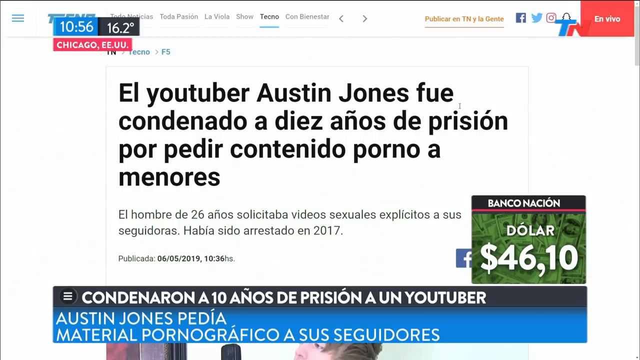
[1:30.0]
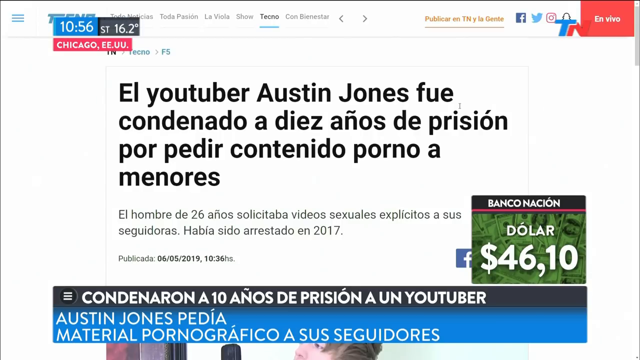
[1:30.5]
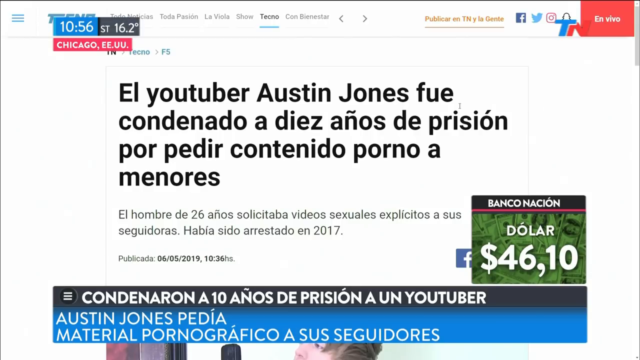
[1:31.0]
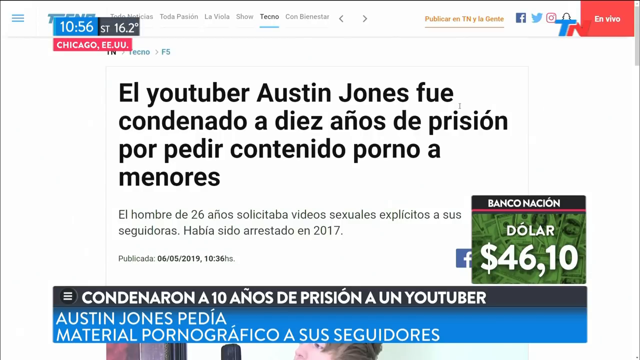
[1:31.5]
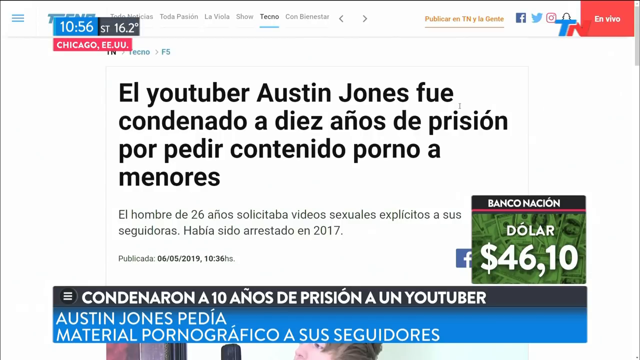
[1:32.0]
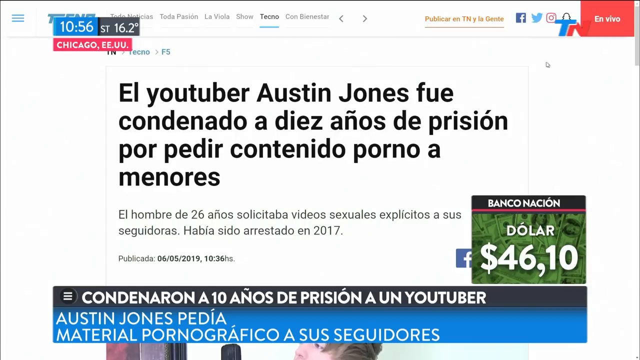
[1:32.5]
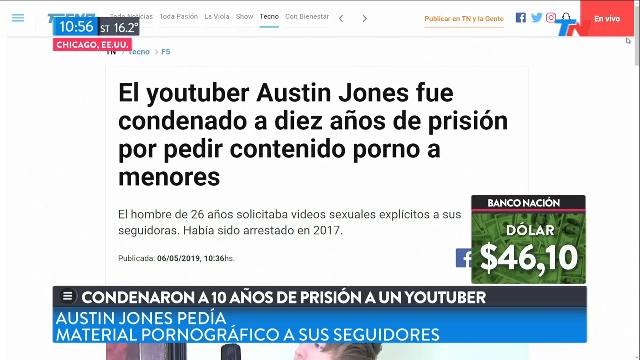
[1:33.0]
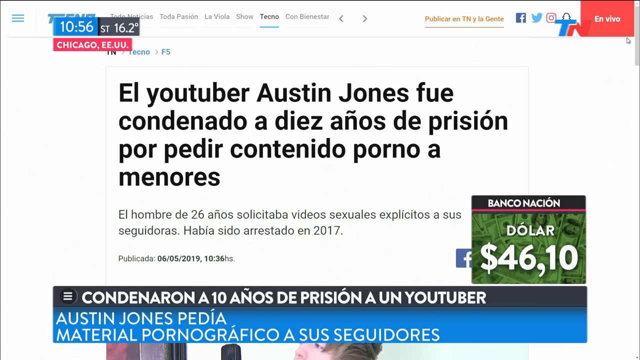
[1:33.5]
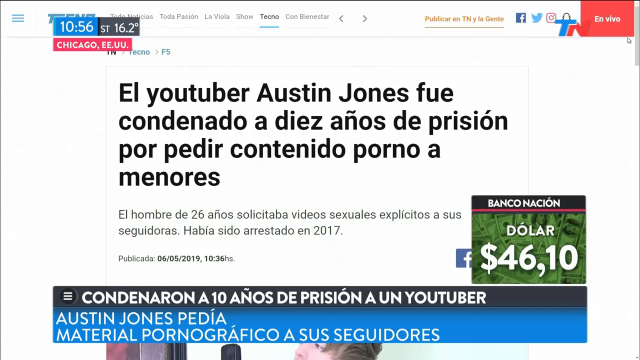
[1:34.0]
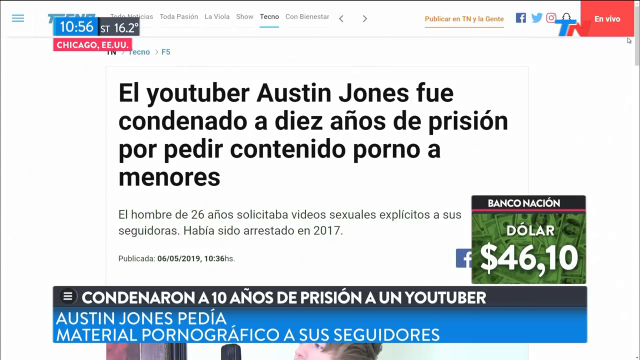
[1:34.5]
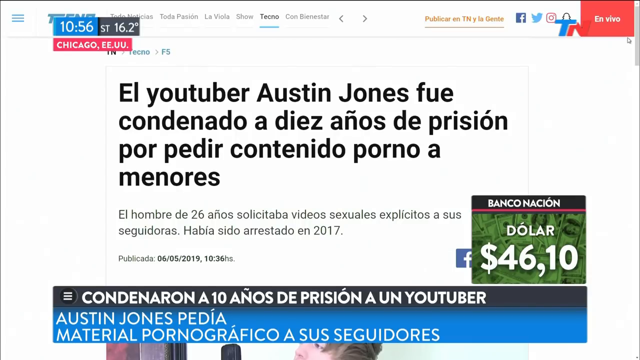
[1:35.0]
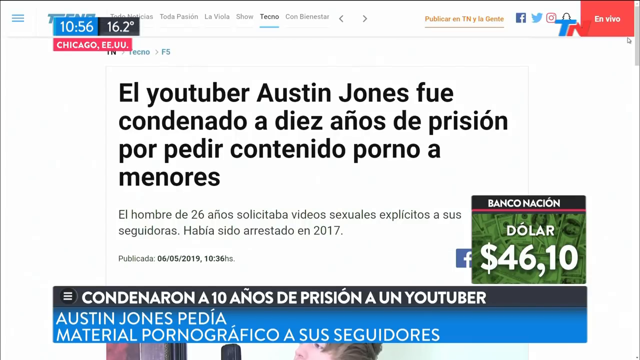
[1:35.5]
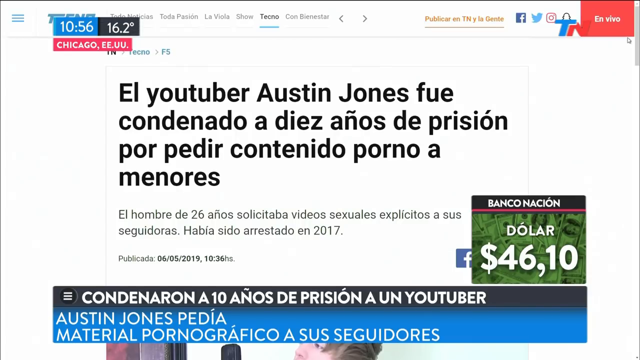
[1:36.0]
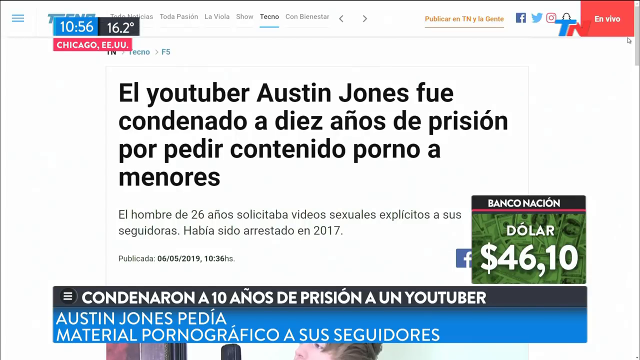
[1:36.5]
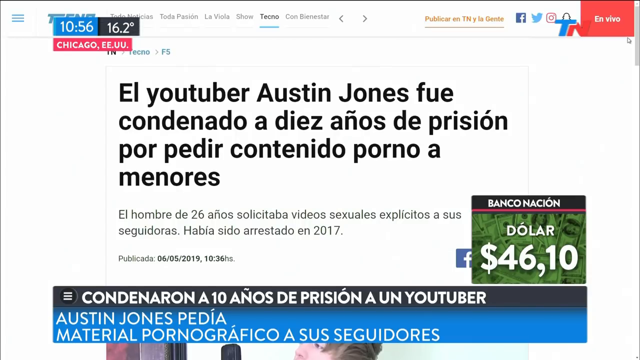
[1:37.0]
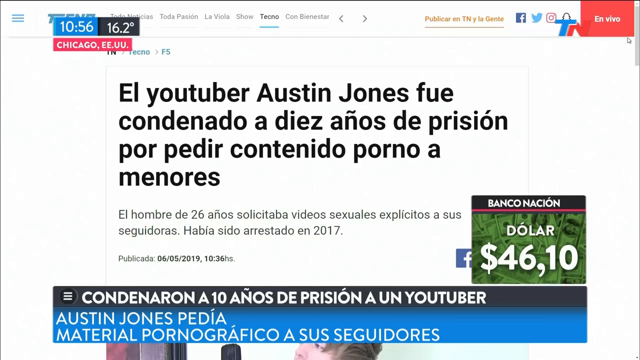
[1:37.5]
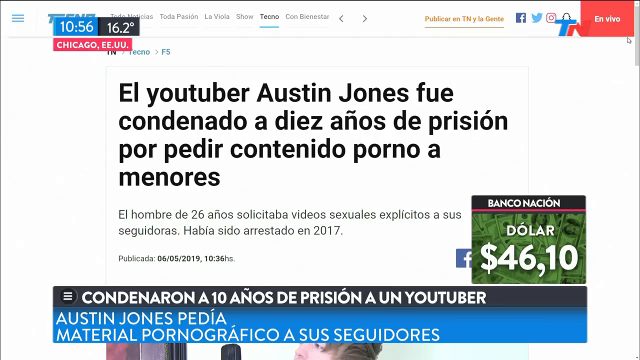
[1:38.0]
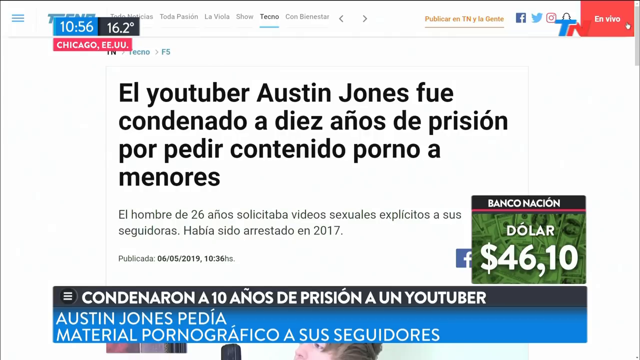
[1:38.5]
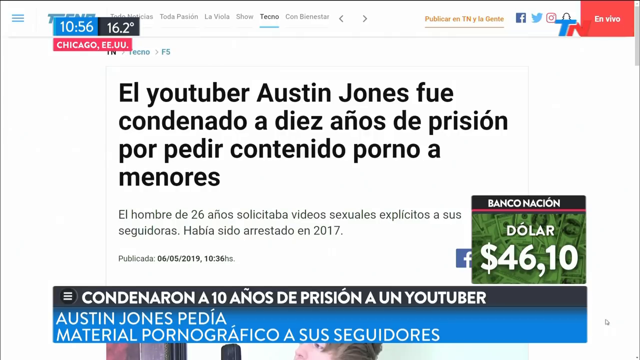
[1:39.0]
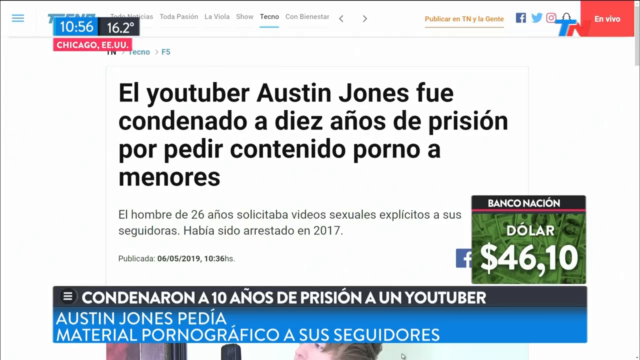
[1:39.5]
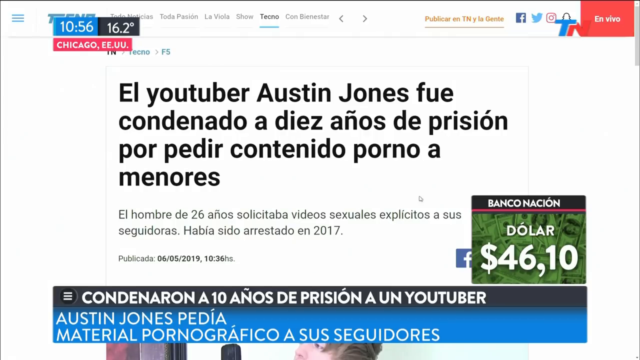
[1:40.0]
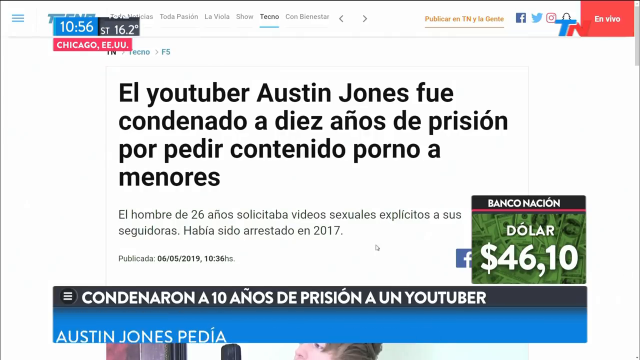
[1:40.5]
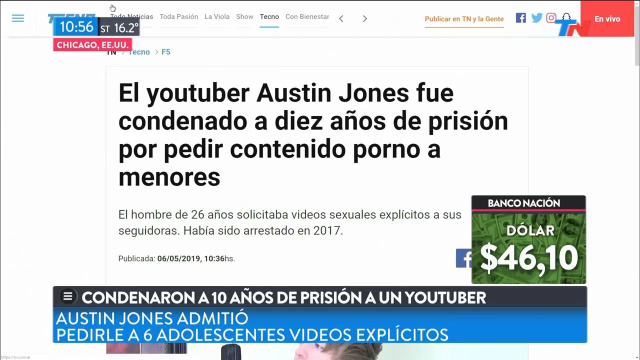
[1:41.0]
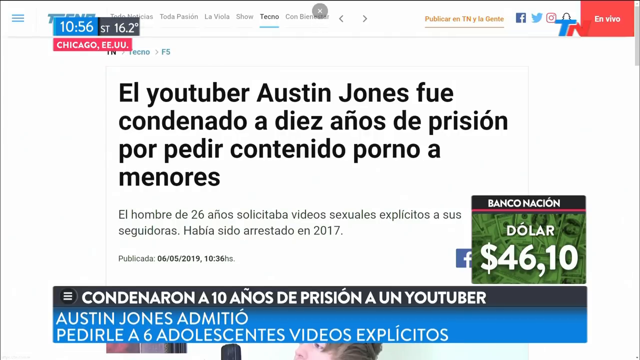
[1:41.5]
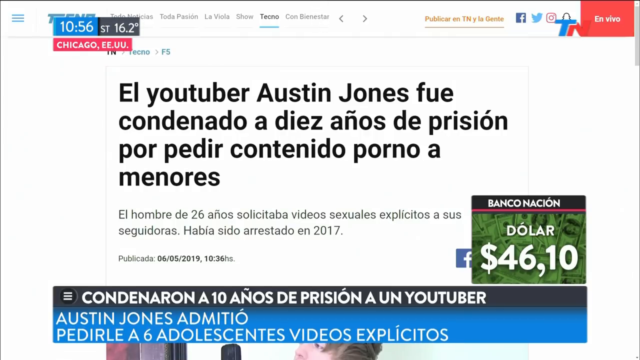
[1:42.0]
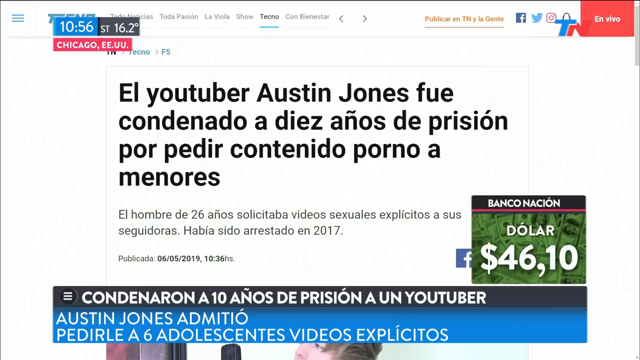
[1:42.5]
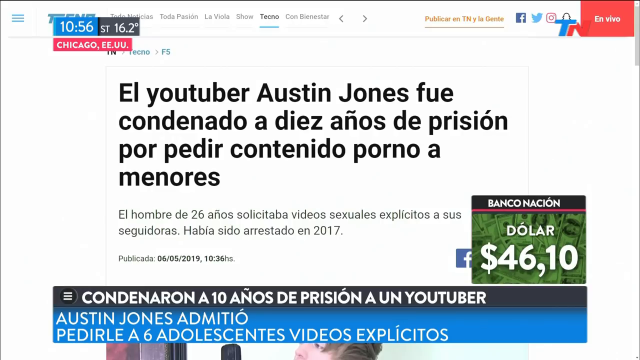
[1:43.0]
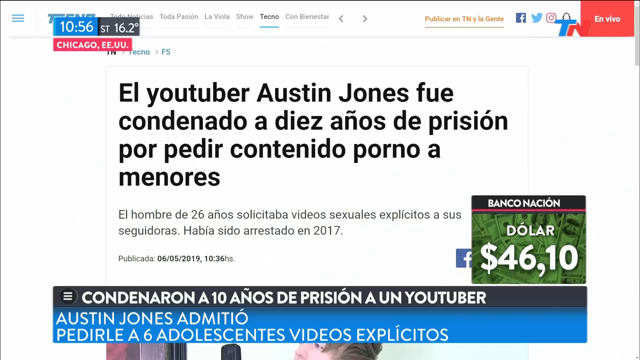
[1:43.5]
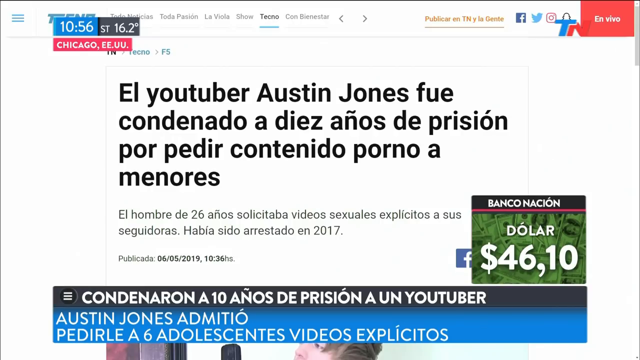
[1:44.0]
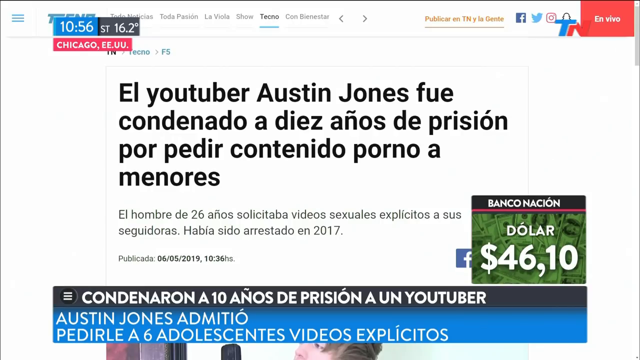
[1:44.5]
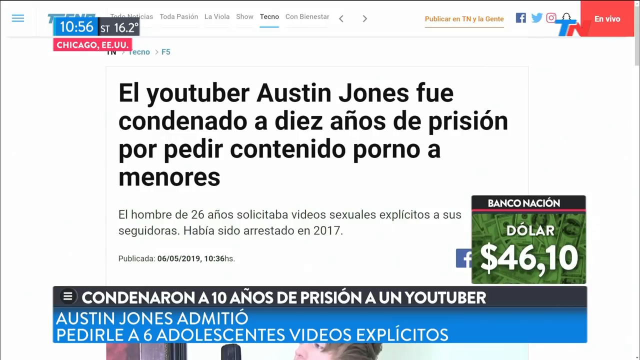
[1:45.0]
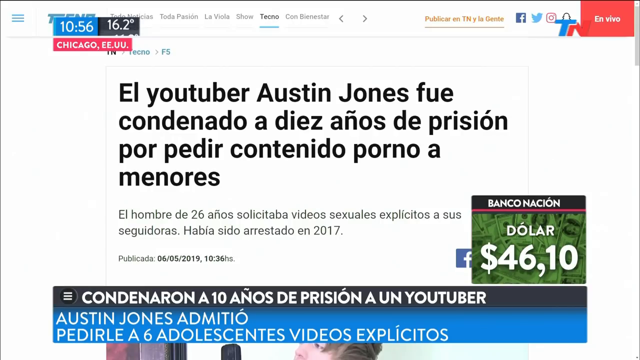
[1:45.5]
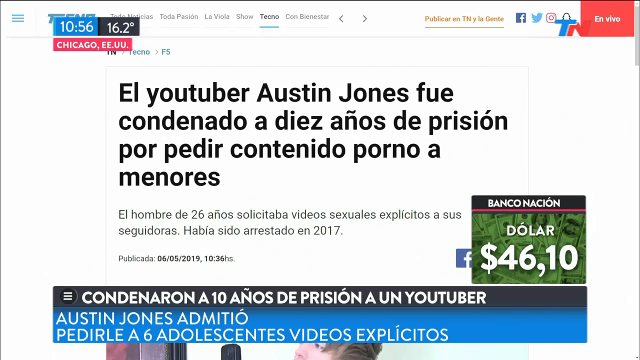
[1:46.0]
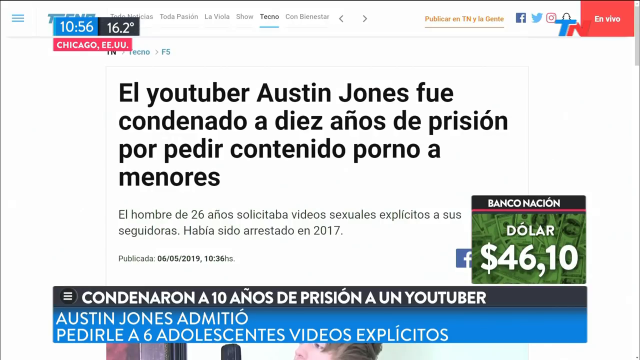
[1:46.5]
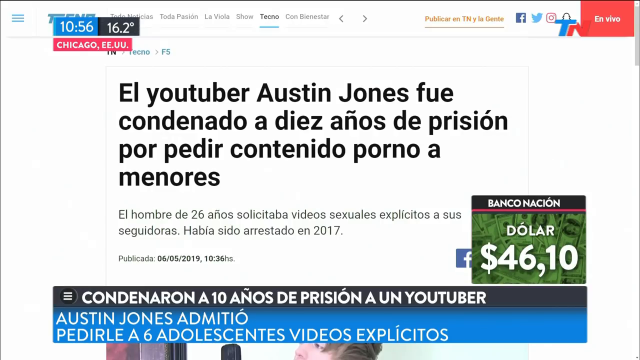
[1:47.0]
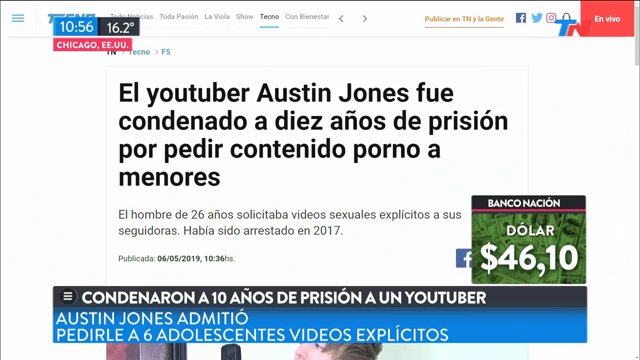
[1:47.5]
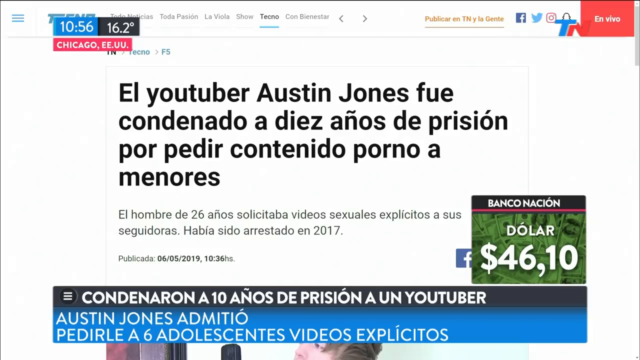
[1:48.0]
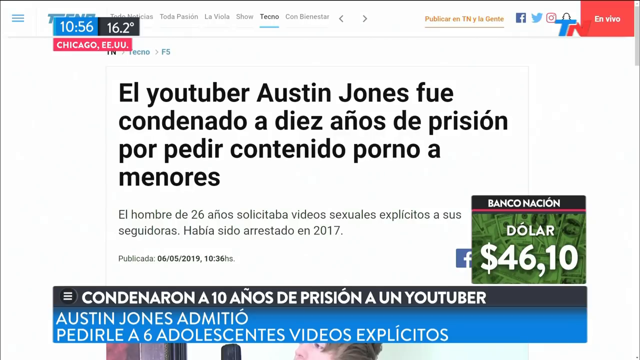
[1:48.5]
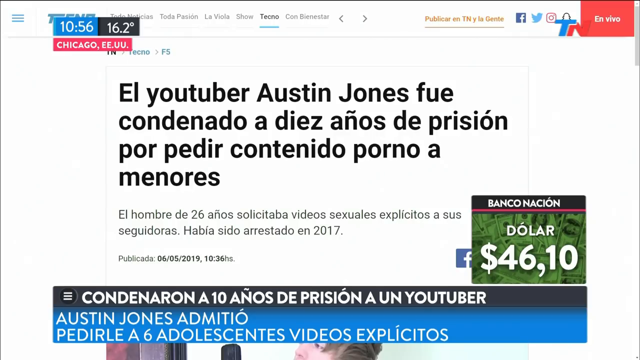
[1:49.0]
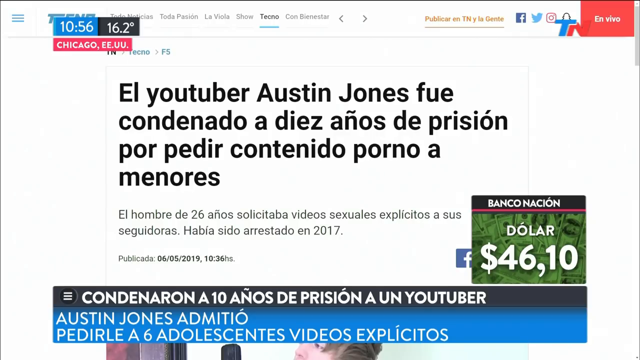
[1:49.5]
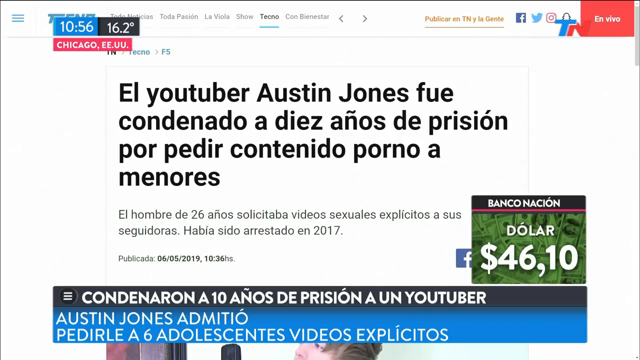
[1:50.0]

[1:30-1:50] The headline of an article on a web page reads "El YouTuber Austin Jones fue condenado a 10 años de prisión." Below it, text reads "El hombre de 26 años solicitaba videos sexuales explicitos." In the upper left of the screen are the time, 10:56, and the temperature, 16.2 degrees, with "Chicago, EEUU" below. In the upper right corner are social media buttons for Facebook, Twitter, Instagram and Snapchat, along with the TN logo, whose T is red or blue and whose N is red.